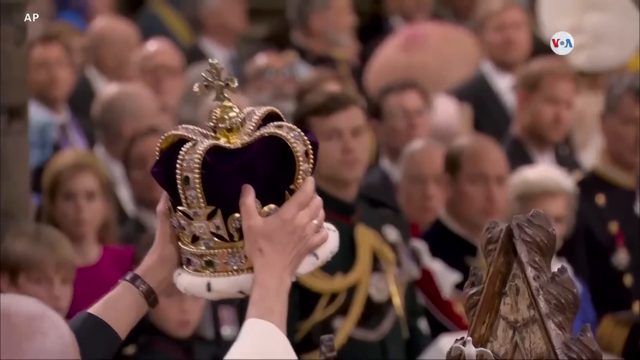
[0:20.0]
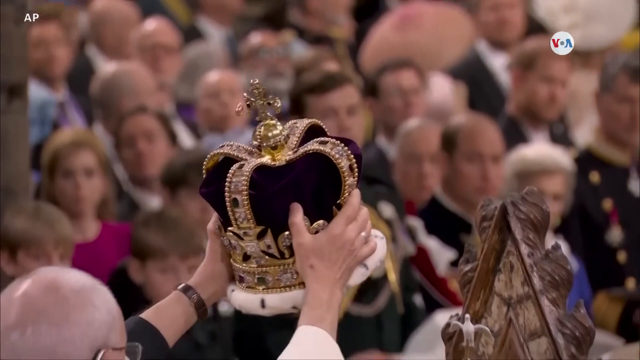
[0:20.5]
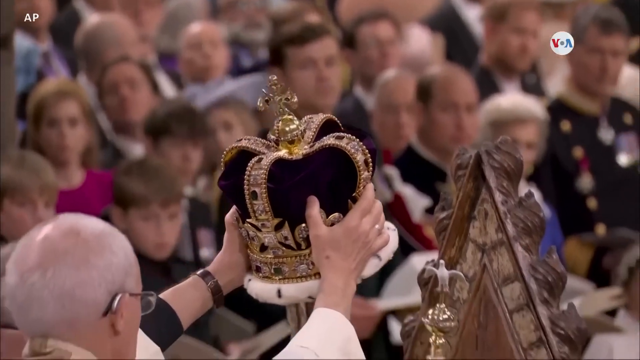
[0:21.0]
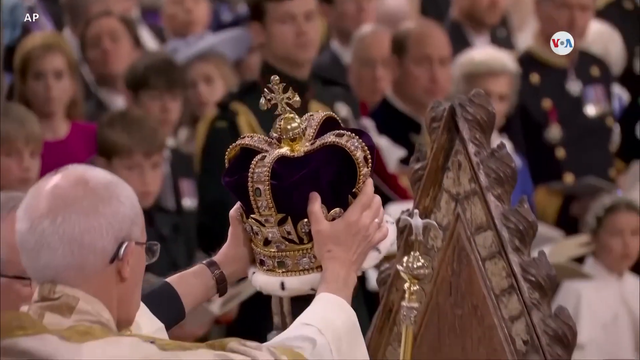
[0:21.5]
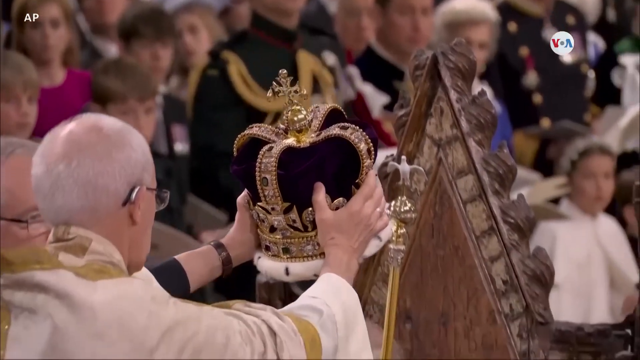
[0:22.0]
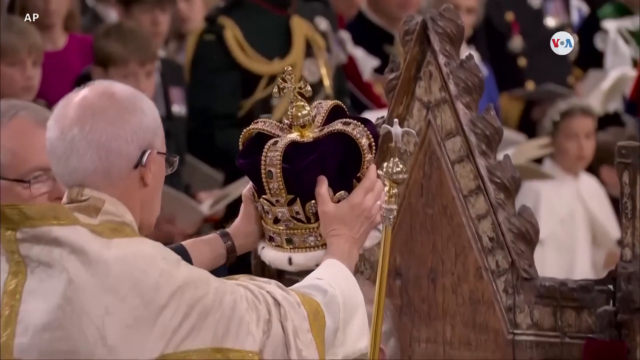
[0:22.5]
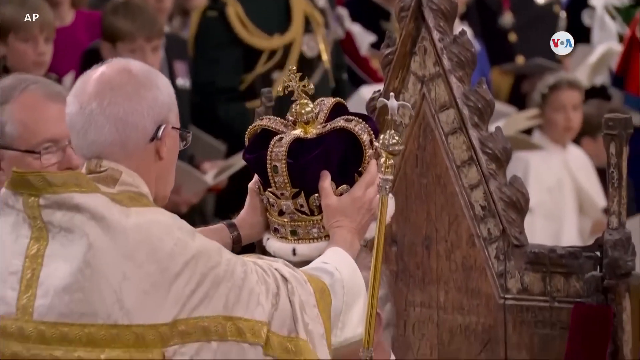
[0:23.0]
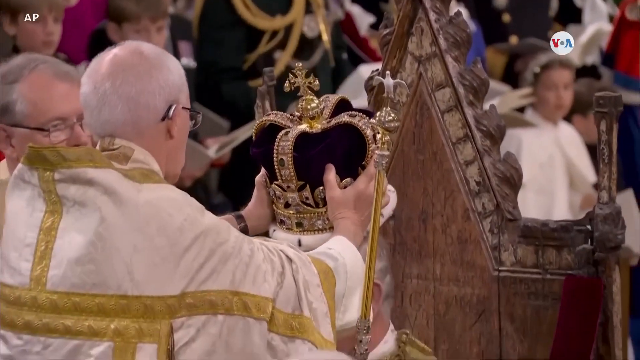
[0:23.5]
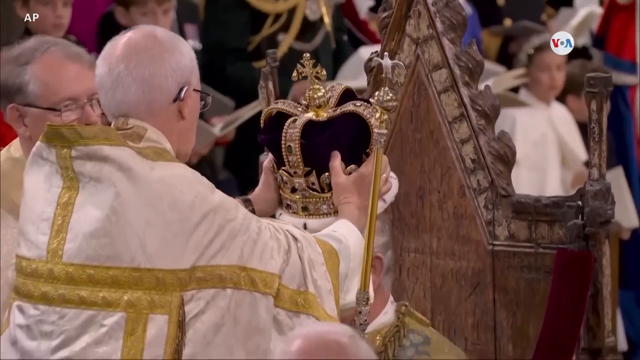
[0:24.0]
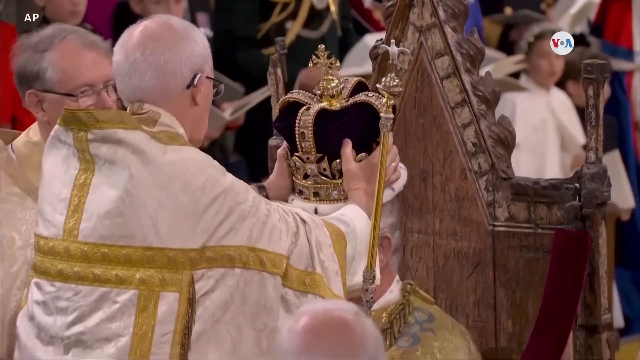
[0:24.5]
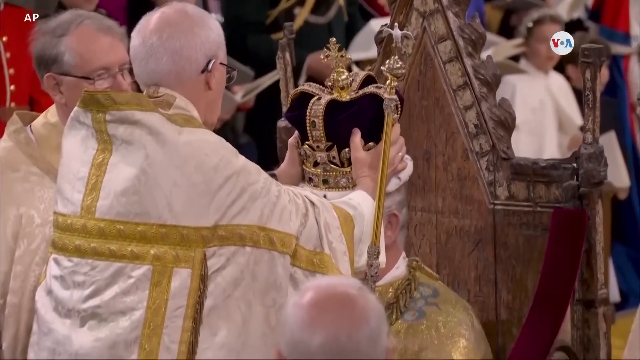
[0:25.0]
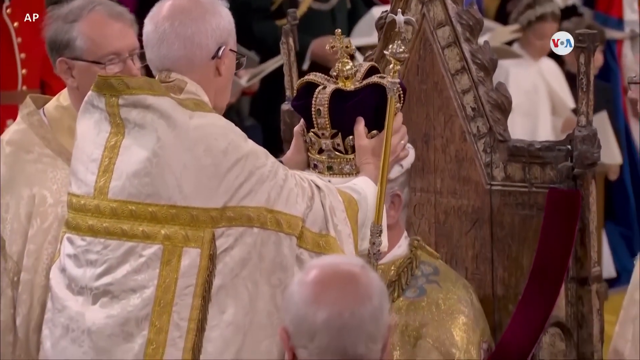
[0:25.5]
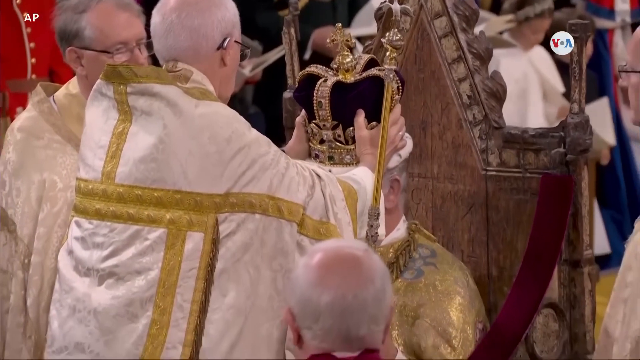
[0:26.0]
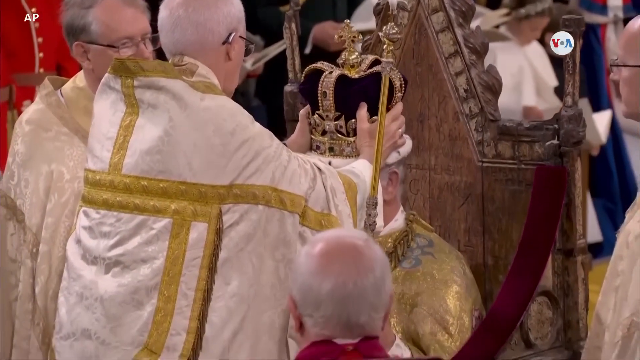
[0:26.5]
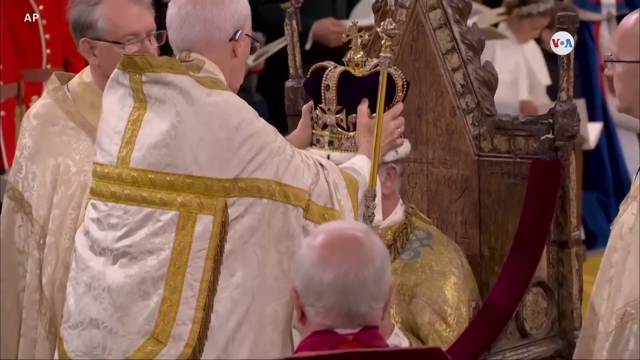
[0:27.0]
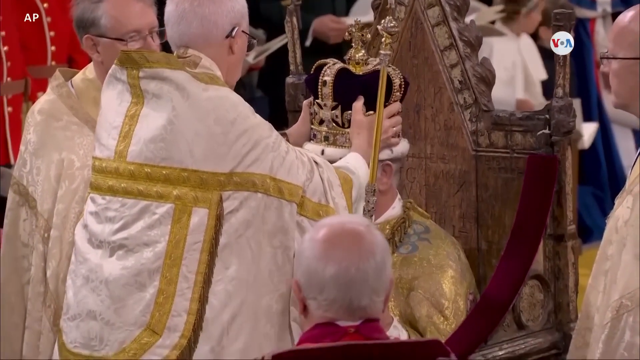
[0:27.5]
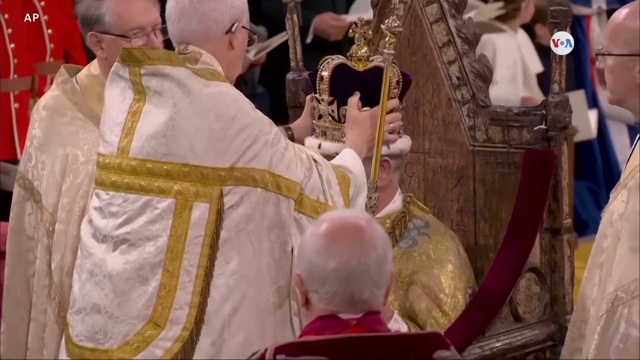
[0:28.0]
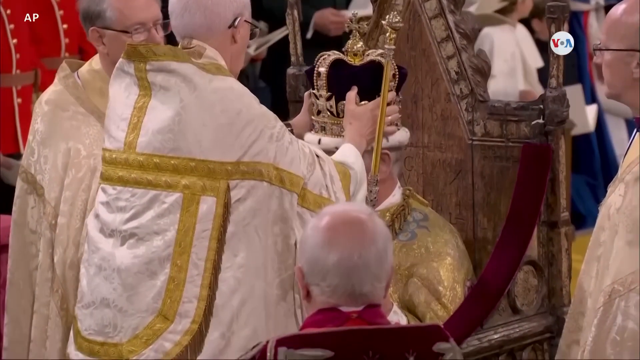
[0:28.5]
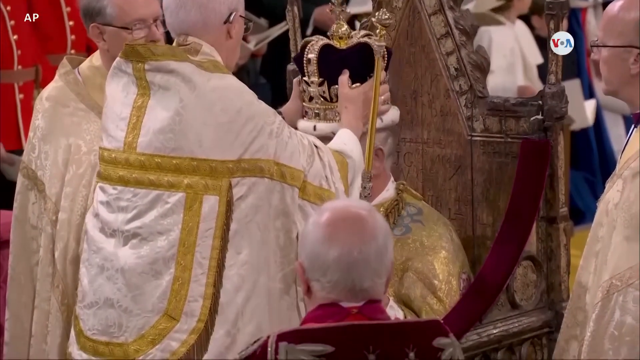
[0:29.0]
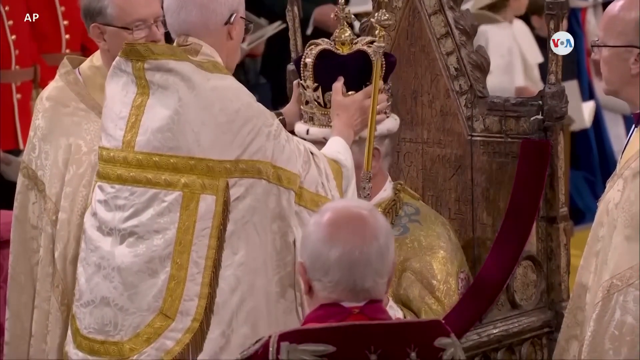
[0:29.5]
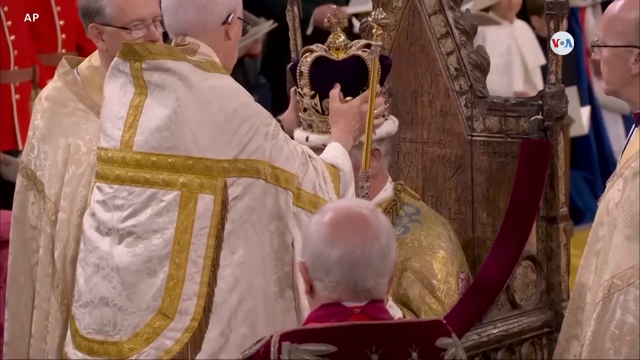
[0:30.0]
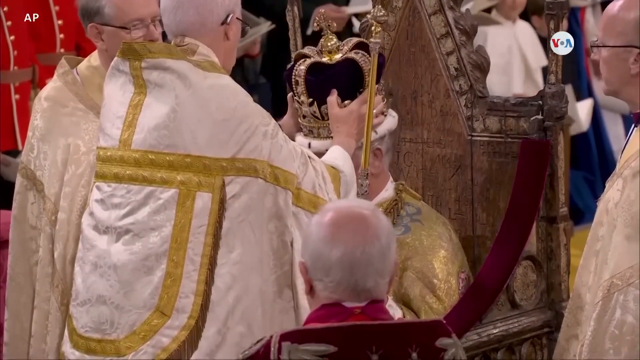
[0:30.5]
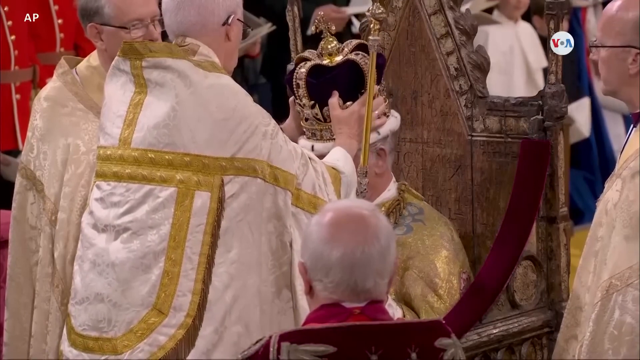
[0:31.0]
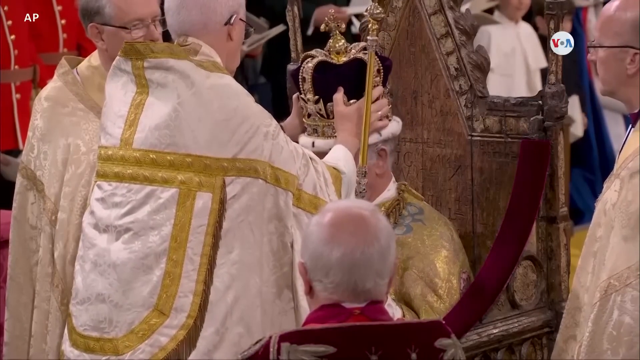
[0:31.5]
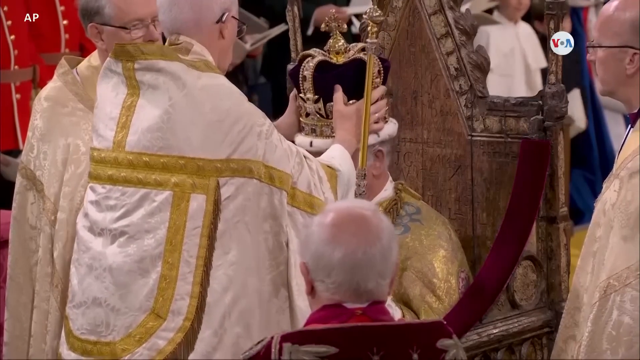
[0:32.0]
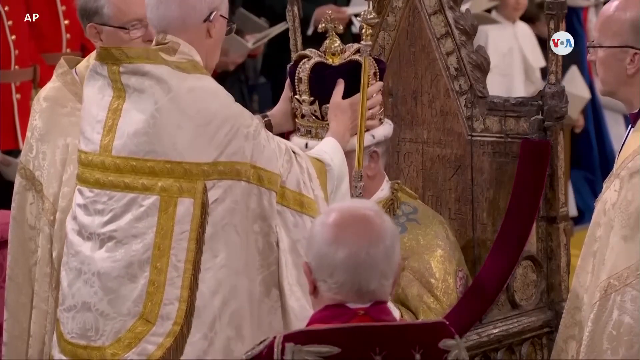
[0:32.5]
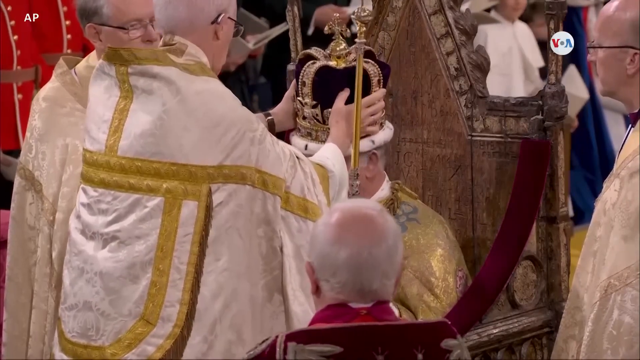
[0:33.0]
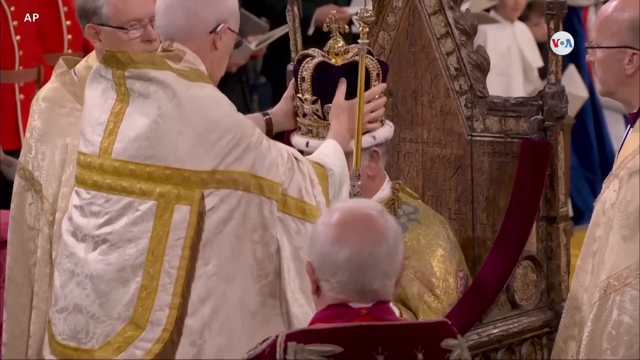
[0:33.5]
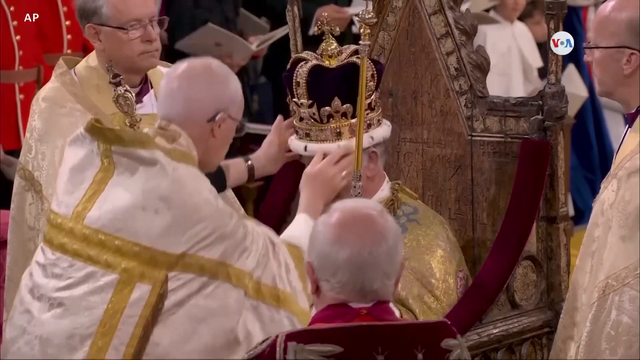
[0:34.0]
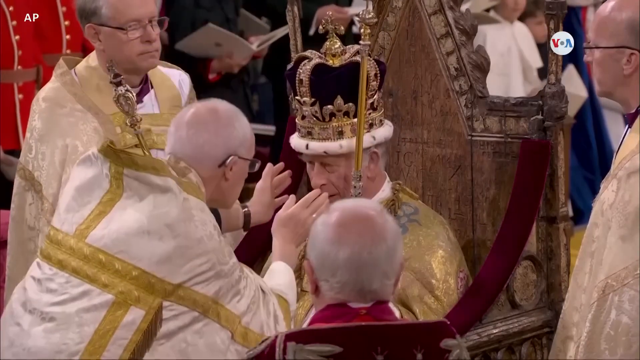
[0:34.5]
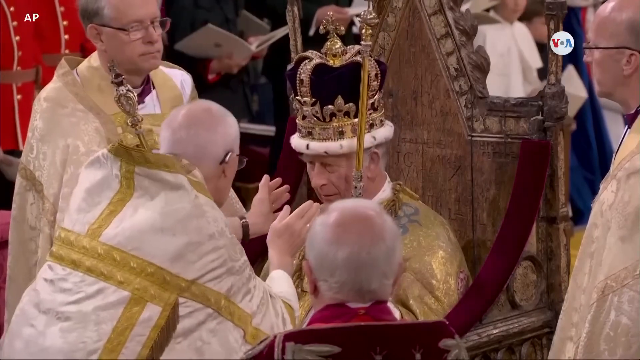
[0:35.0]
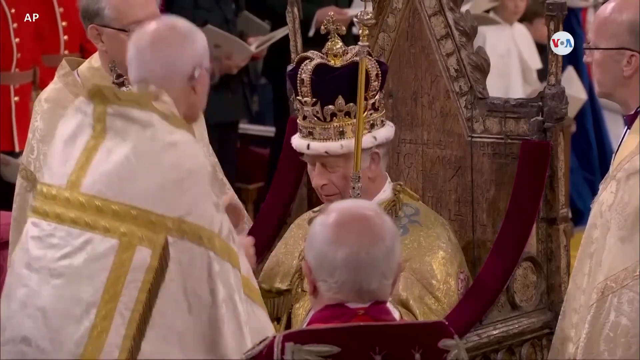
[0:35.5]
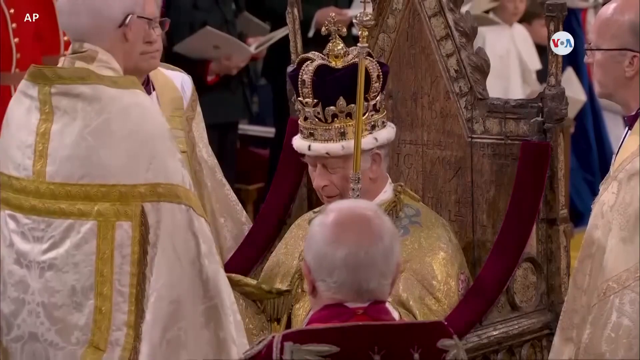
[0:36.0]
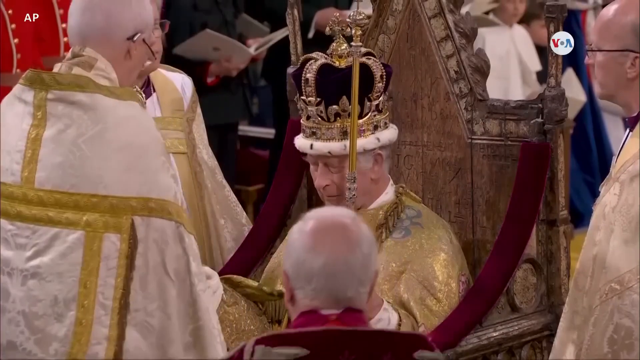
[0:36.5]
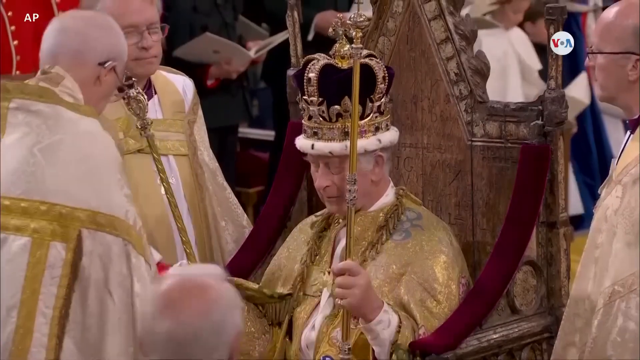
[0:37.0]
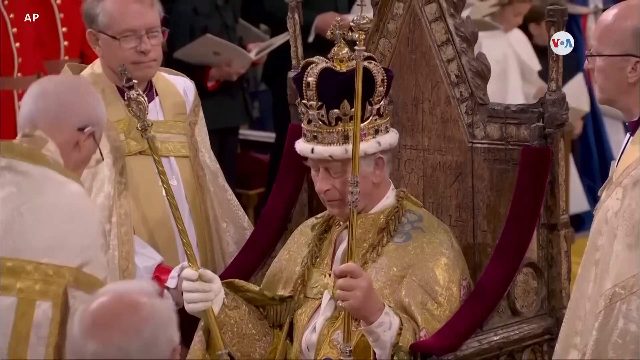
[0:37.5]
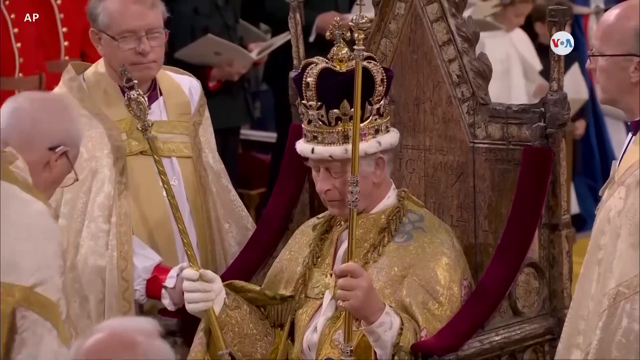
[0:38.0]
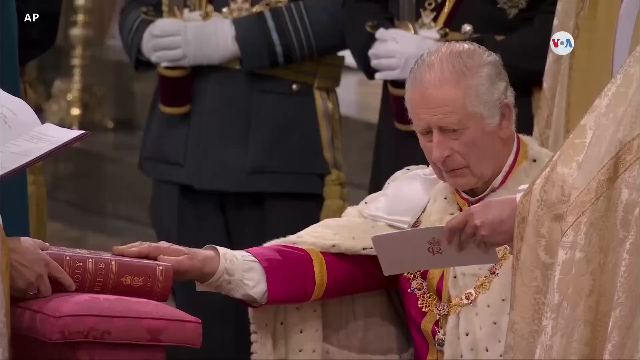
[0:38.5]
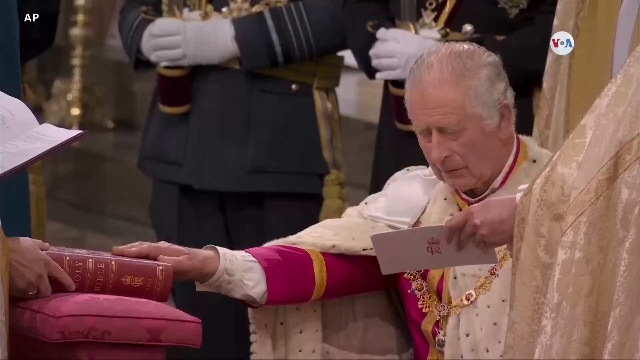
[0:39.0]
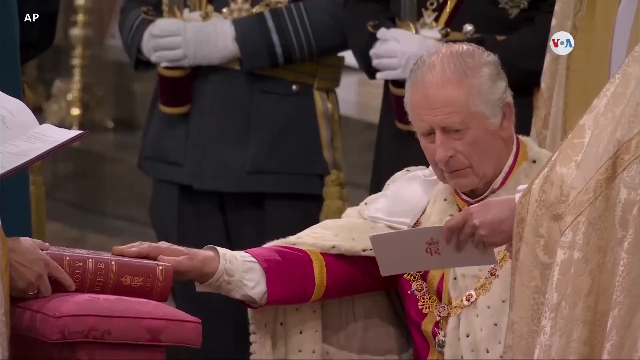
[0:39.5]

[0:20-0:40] A close-up shows the crown about to be placed on the head of King Charles. The Archbishop of Canterbury, in a white robe, holds the bejewelled purple and gold crown aloft, then slowly lowers it and places it on King Charles' head, seen in close-up. The throne he sits on is not gold but sort of looks like a wooden material, probably very old. The King holds two gold rods, one in each hand, as the crown is placed on his head; it is sort of moved around to make sure it is secure. The person placing the crown, wearing a white robe with a gold trim around it and running down it, talks to King Charles, apparently asking whether it is secure. The video then cuts to a close-up of King Charles without the crown and without the rods. One hand touches a holy bible, and someone holds out a white card in front of him, which he reads from.